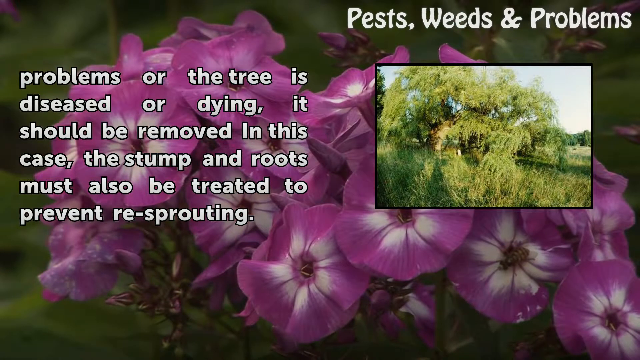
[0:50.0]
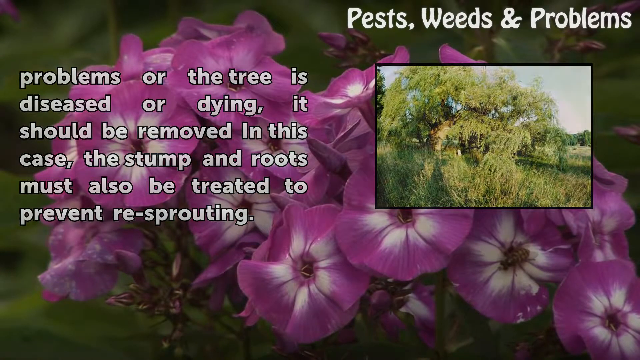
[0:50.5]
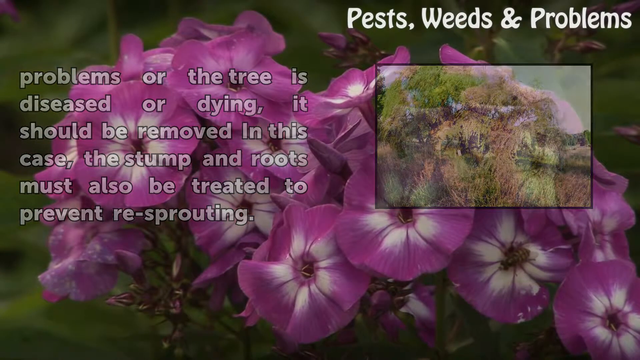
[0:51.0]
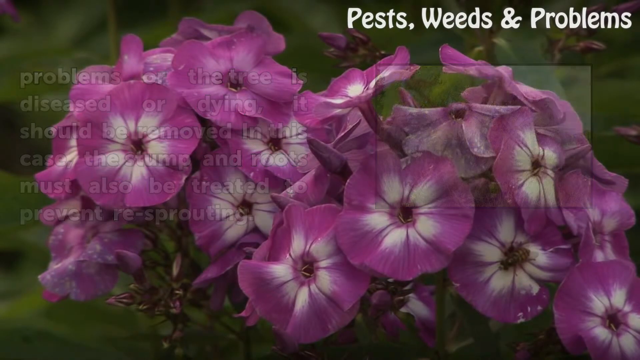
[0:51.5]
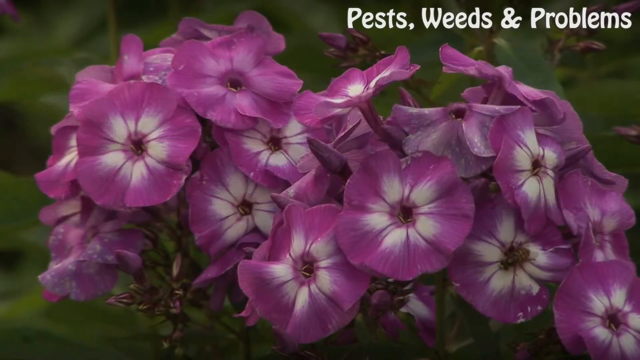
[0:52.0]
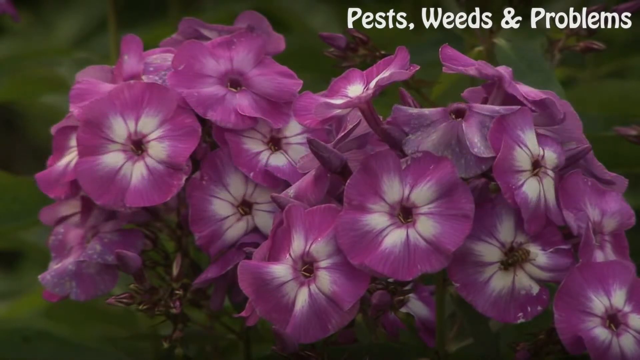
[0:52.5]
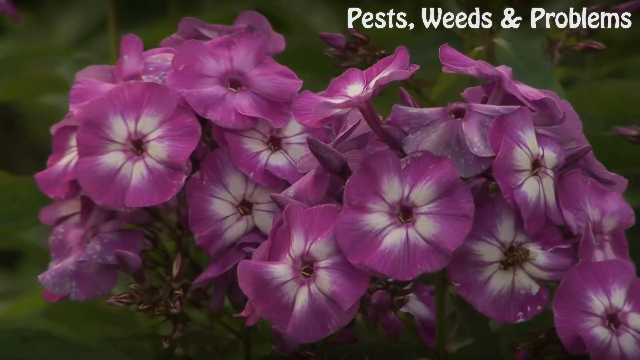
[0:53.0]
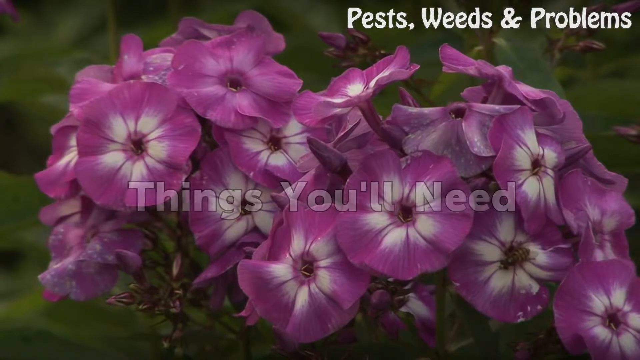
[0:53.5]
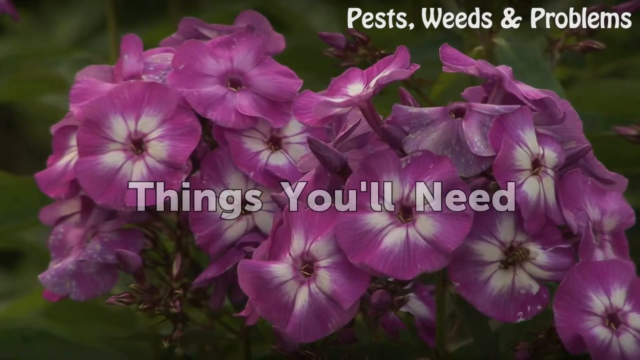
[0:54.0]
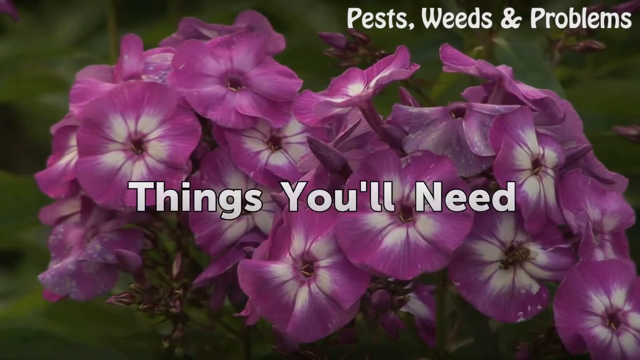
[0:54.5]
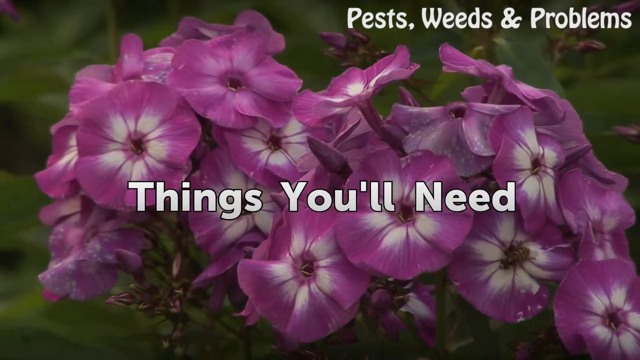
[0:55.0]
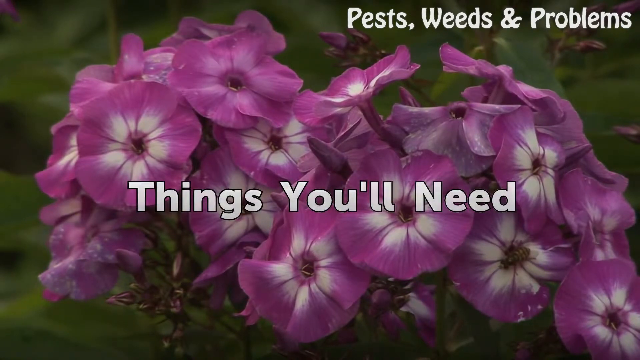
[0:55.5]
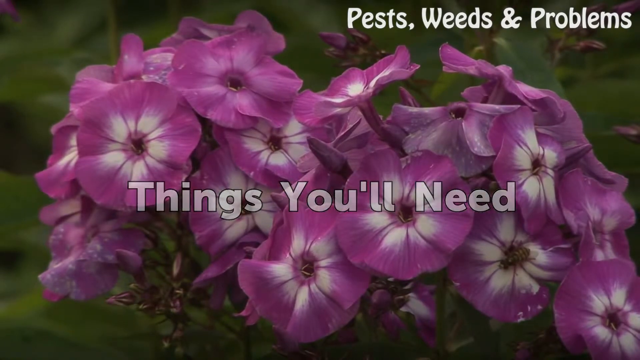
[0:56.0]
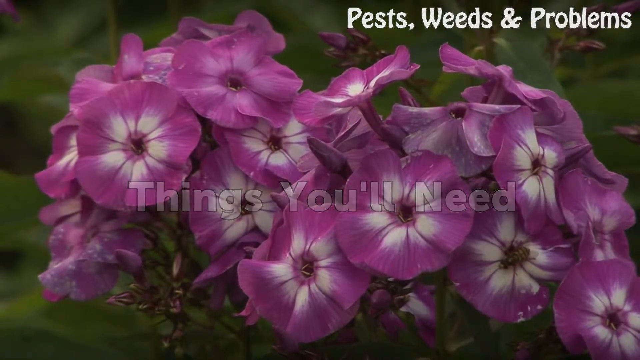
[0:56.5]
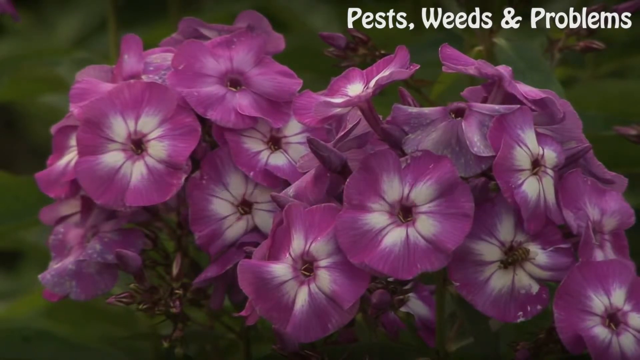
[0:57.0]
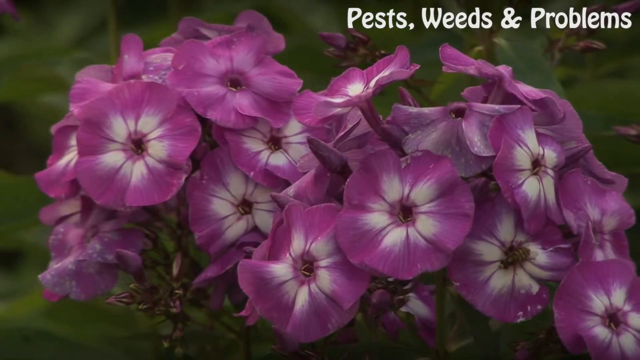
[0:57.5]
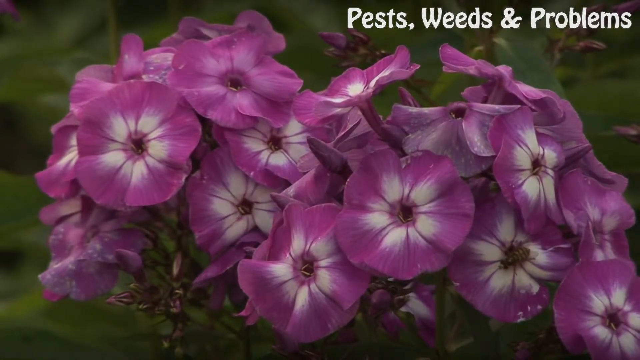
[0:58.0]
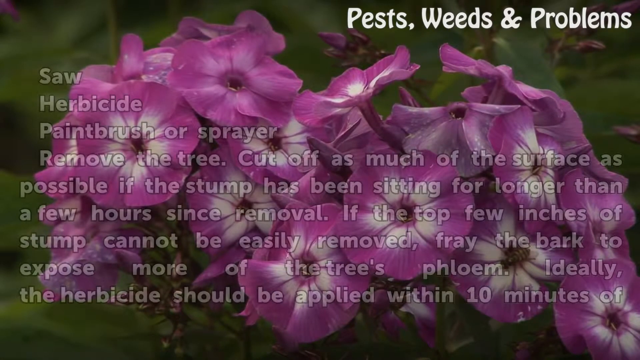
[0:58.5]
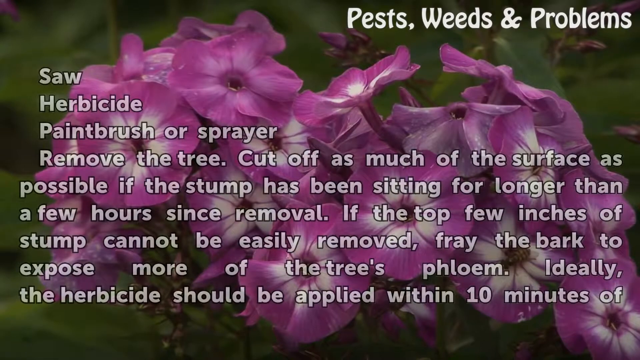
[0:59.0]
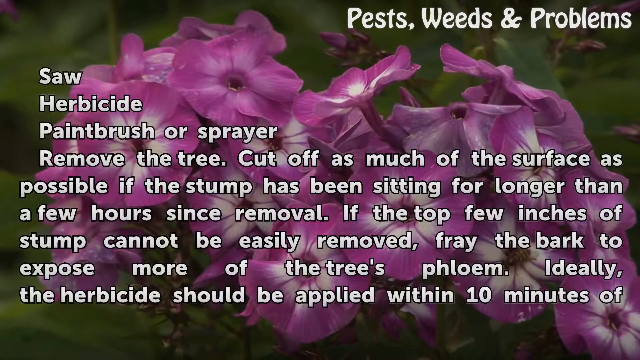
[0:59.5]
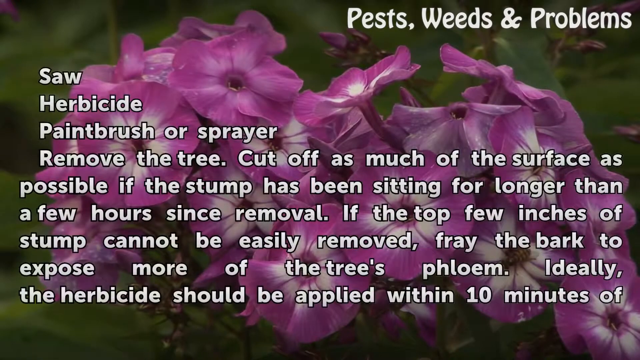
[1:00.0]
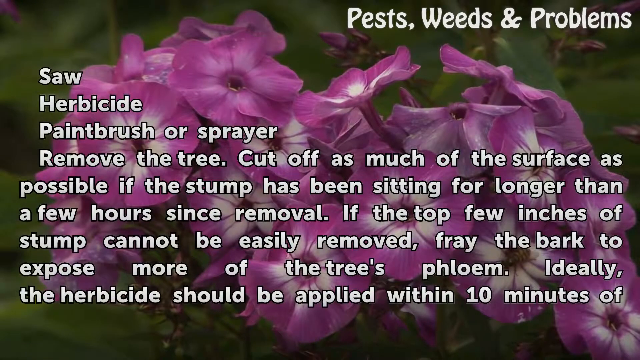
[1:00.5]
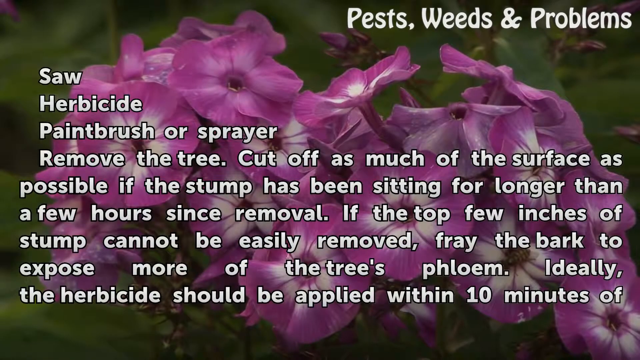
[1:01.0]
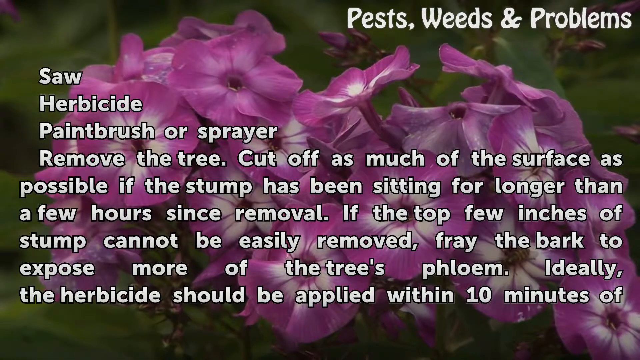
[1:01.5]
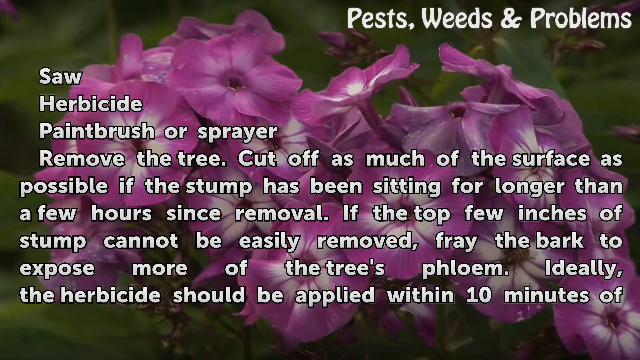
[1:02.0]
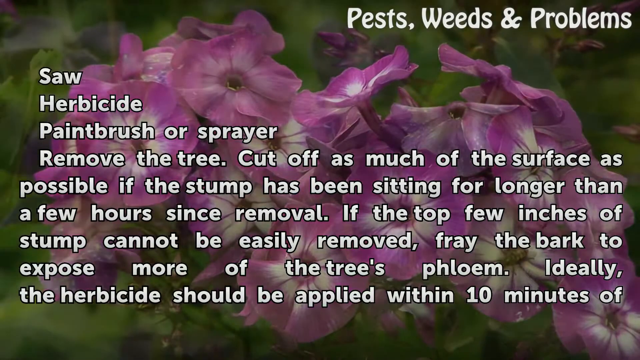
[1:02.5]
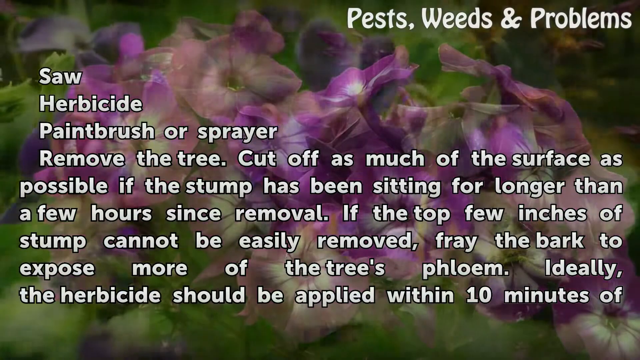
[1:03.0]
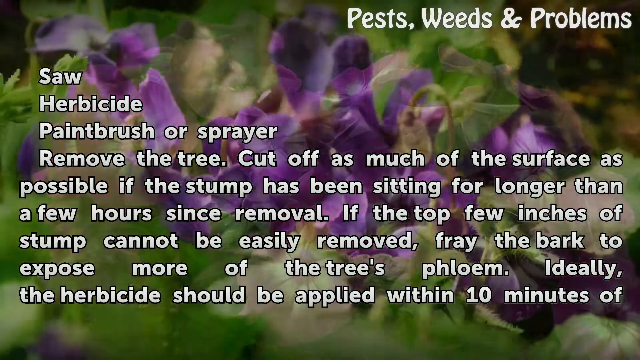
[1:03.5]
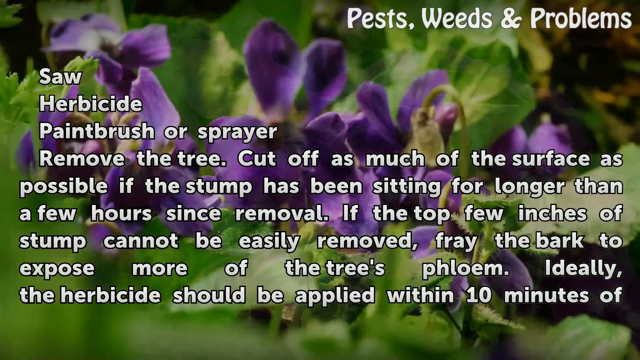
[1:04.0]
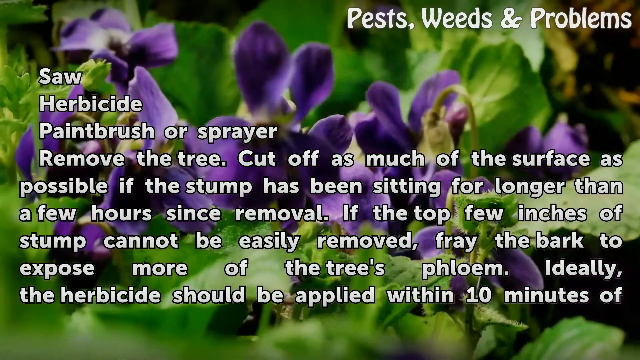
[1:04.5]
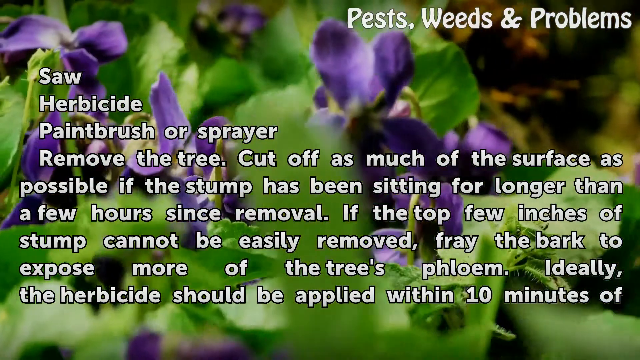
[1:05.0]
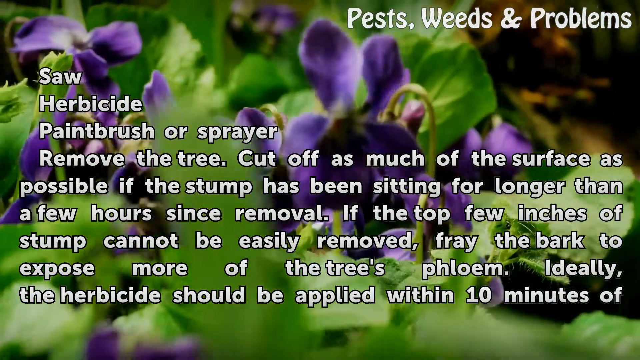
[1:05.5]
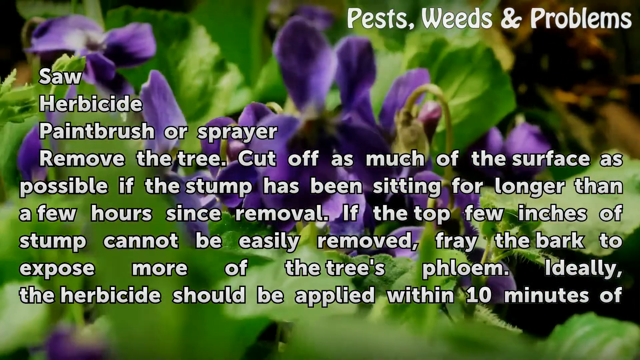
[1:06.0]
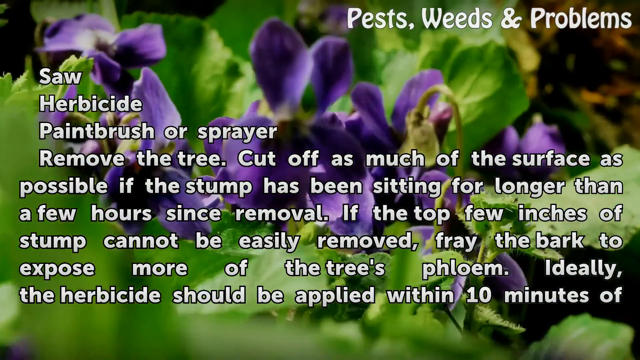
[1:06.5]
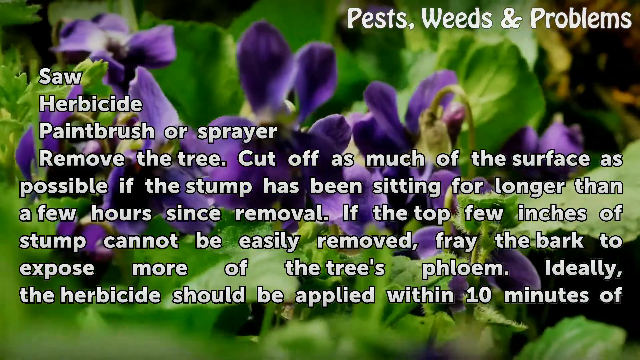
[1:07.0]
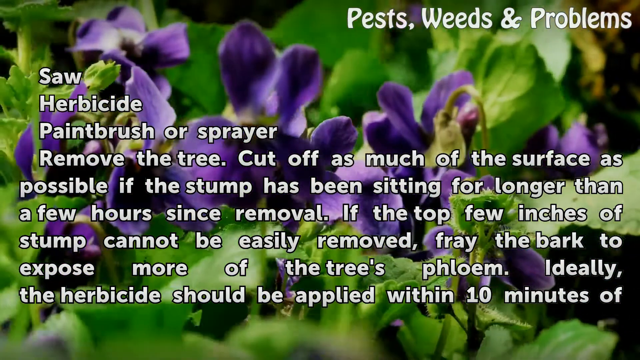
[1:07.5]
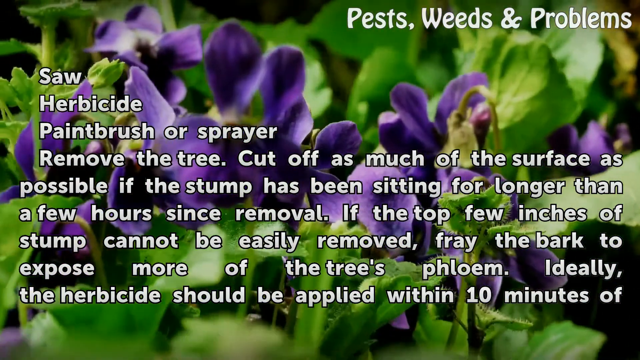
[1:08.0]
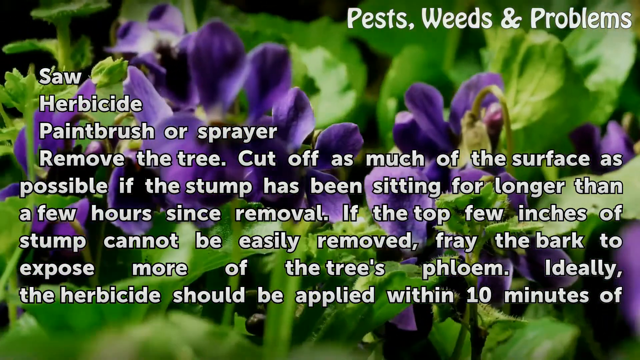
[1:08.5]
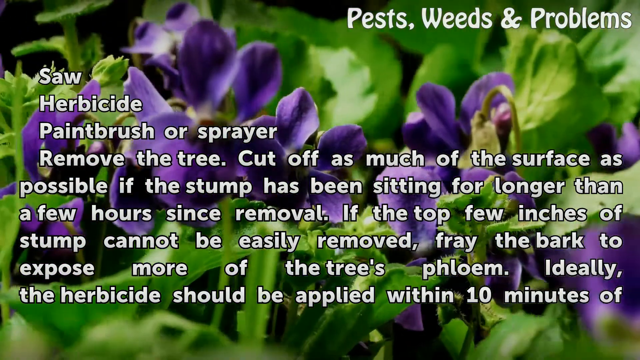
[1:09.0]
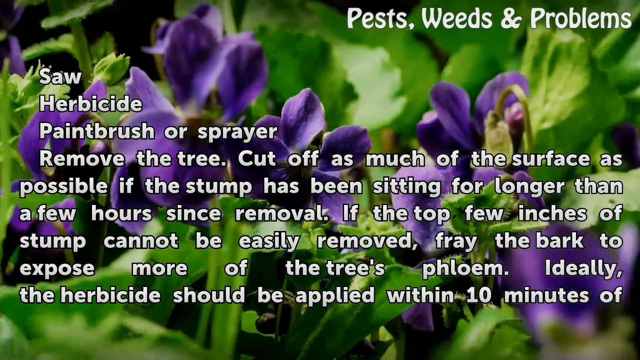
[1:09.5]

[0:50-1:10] The background is mostly purple flowers with some white flowers. On the right side is an image of what appears to be the willow tree. Text, split across several lines, reads "problems or the tree is diseased or dying, it should be removed in this case, the stump and roots must also be treated to prevent re-sprouting." Next comes "things you'll need", listing "saw", "herbicide" and "paintbrush or sprayer". Then text reads "remove the tree. Cut off as much of the surface as possible if the stump has been sitting for longer than a few hours since removal. If the top few inches of the stump cannot be easily removed, fray the bark to expose more of the tree's phloem. Ideally, the herbicide should be applied within 10 minutes of".